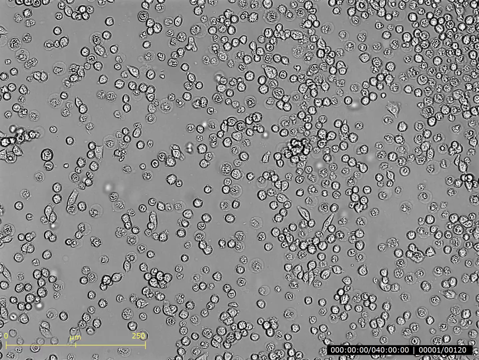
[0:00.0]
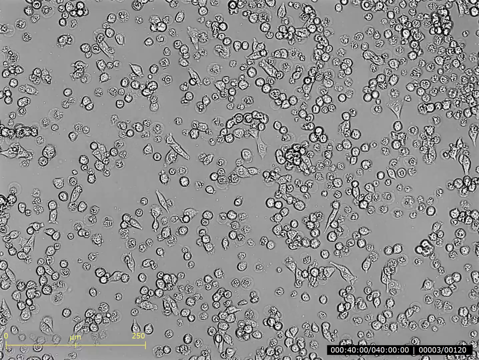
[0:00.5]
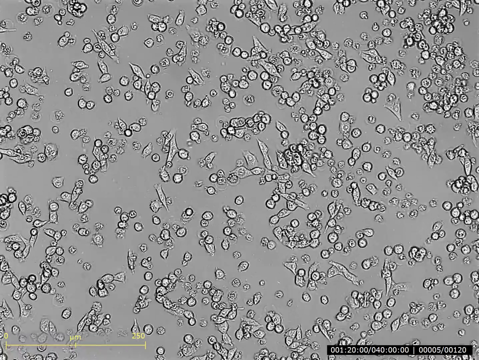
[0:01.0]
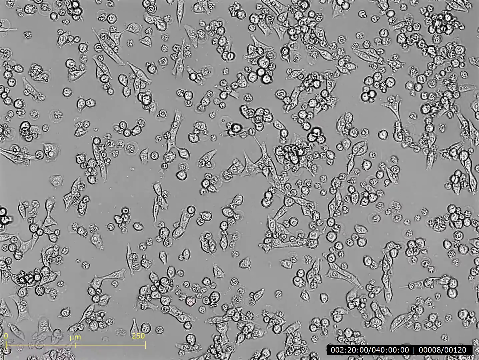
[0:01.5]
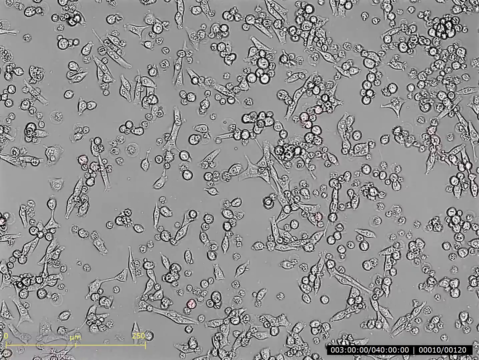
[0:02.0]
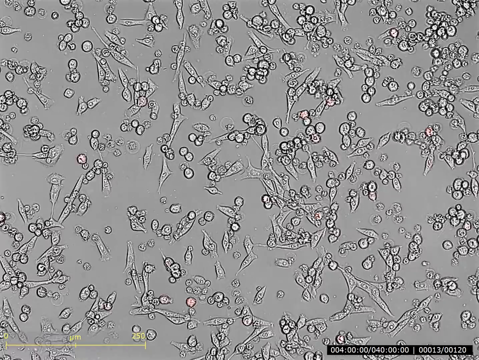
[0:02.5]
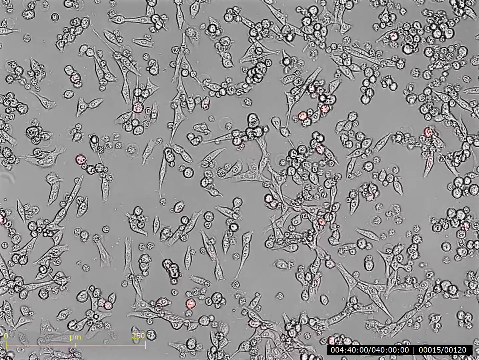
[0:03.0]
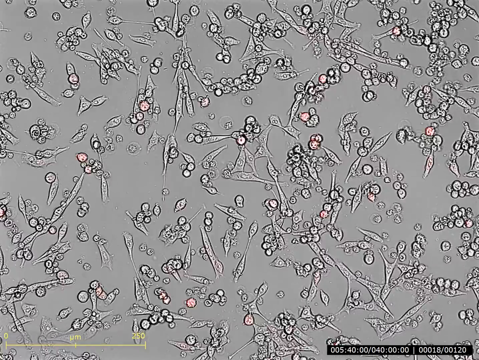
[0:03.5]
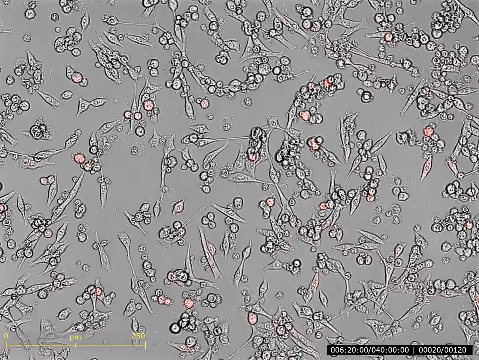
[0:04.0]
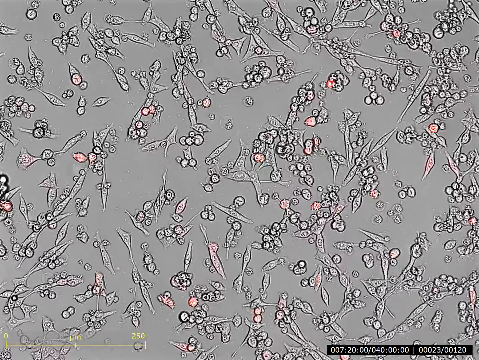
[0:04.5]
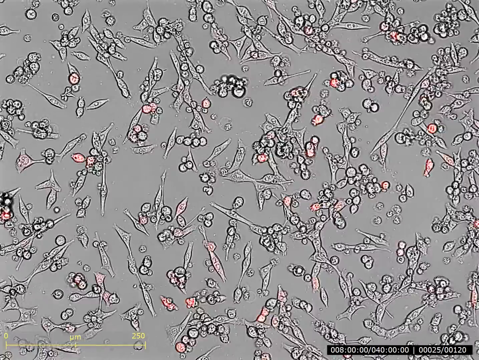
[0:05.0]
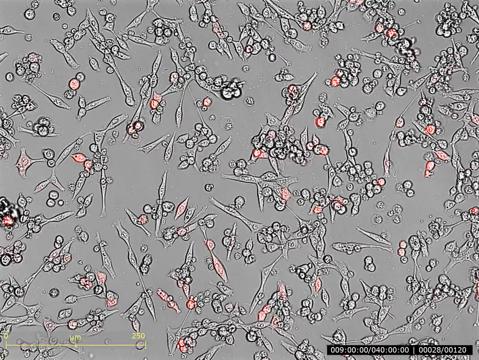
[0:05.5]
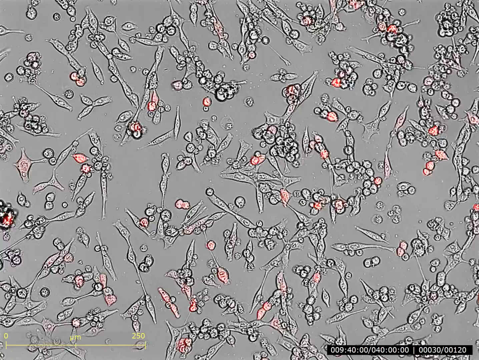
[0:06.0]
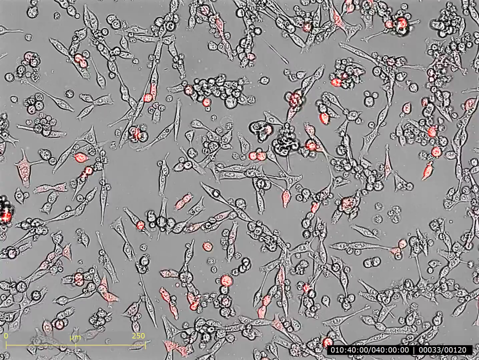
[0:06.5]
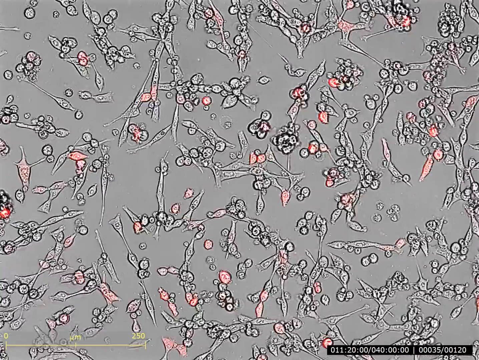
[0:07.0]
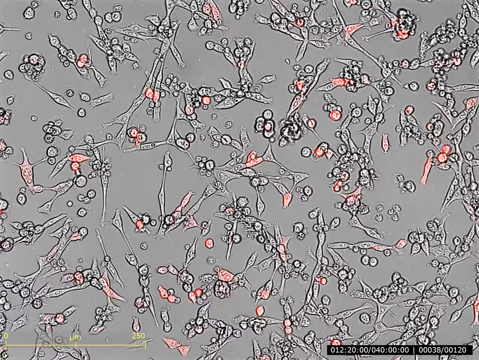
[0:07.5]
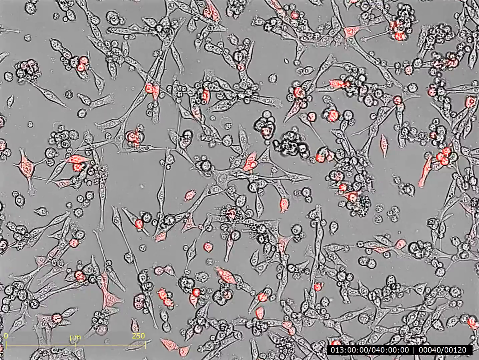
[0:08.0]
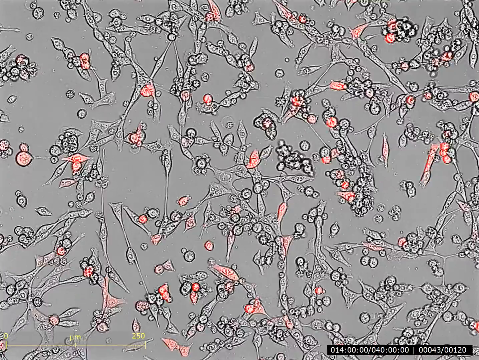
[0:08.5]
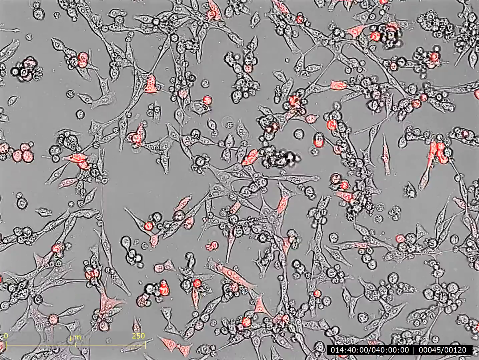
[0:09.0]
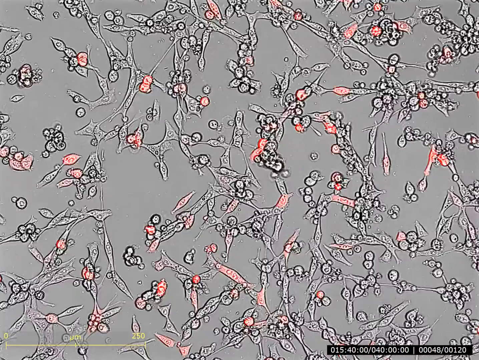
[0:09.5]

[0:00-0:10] The image looks like something seen through a microscope: small, unidentified objects, possibly germs or bacteria, that almost seem to move the way they would under a microscope. The background is a silvery gray, and the objects include some circle shapes and some oblong shapes. At first everything is gray, and as the movement goes on, reddish colors seem to appear. Sometimes the circular shapes hit neighboring circular shapes and form one giant shape, making the whole screen look kind of like it is pulsating as the little things move. In the bottom right there appears to be some type of timer, a black box with white letters, counting down.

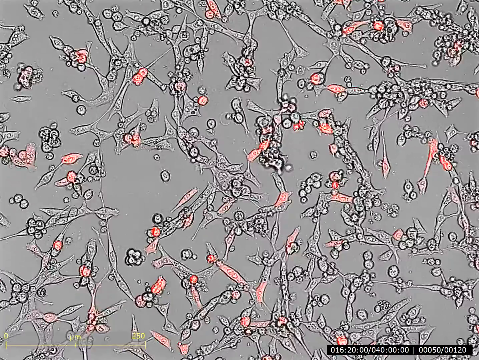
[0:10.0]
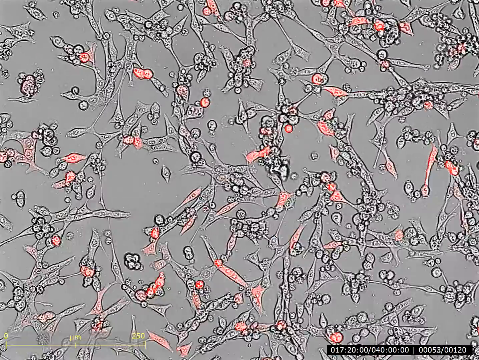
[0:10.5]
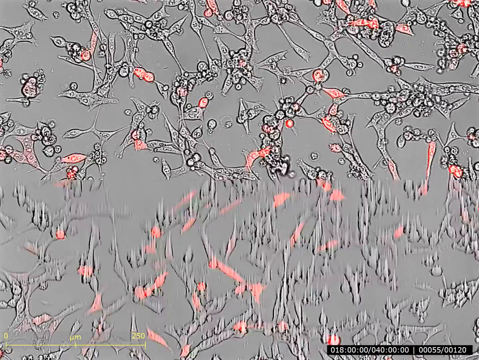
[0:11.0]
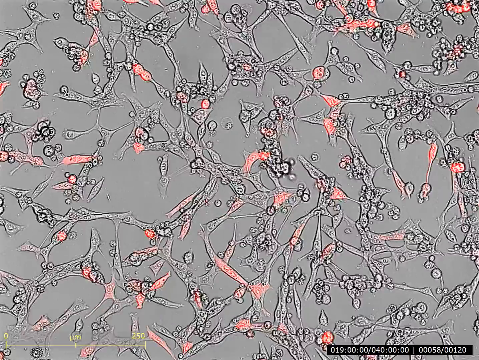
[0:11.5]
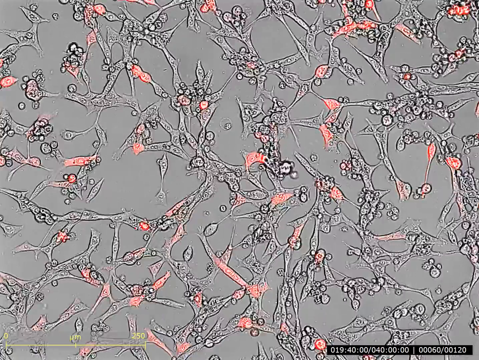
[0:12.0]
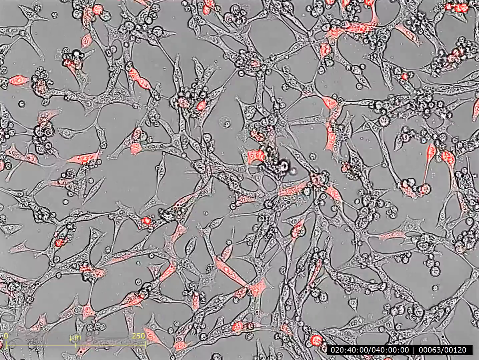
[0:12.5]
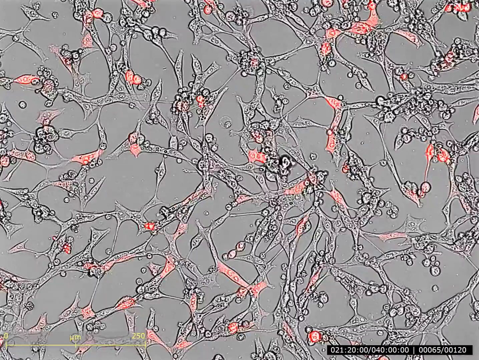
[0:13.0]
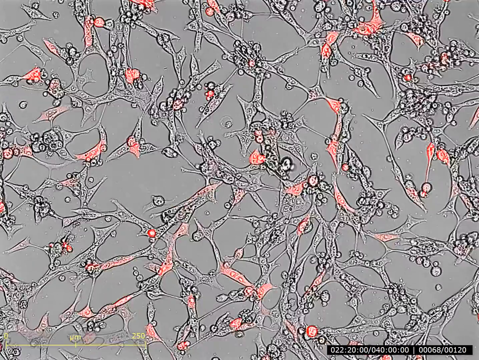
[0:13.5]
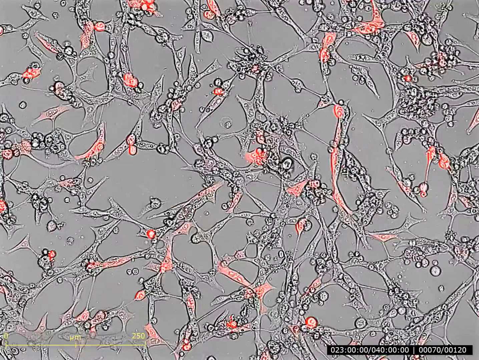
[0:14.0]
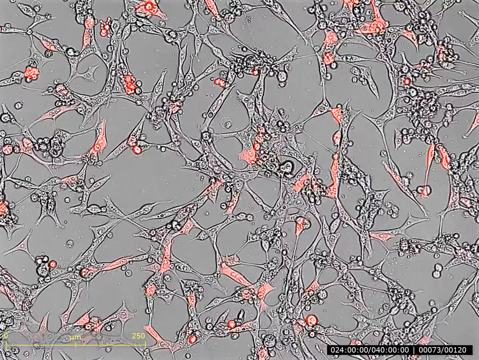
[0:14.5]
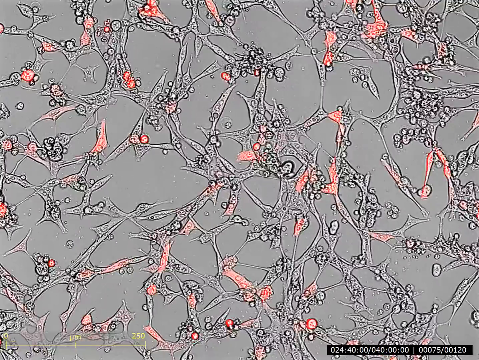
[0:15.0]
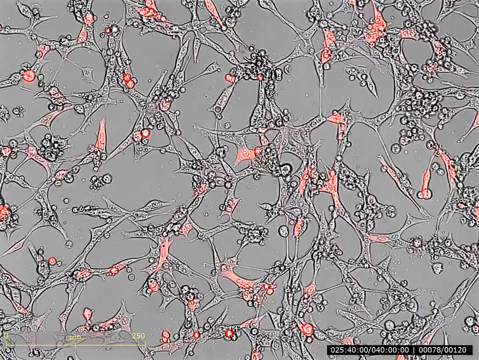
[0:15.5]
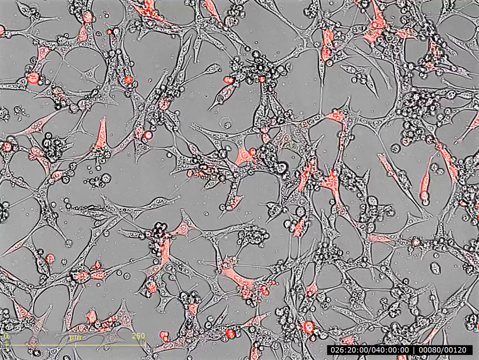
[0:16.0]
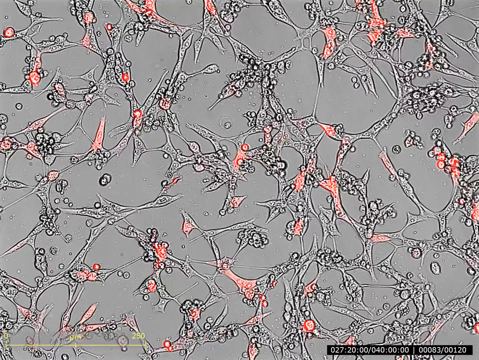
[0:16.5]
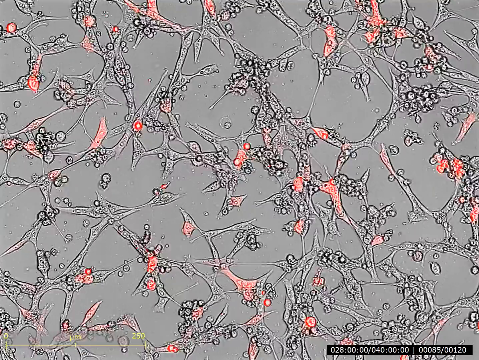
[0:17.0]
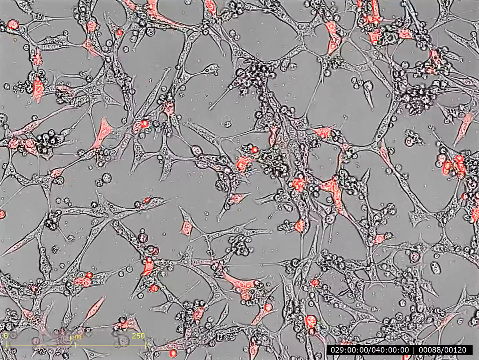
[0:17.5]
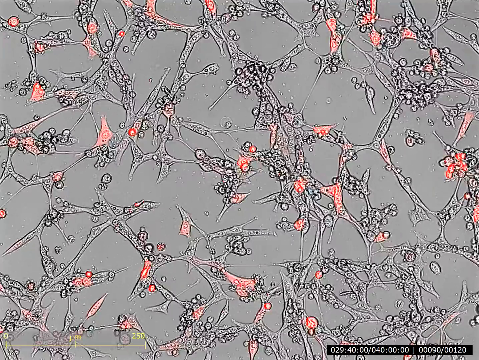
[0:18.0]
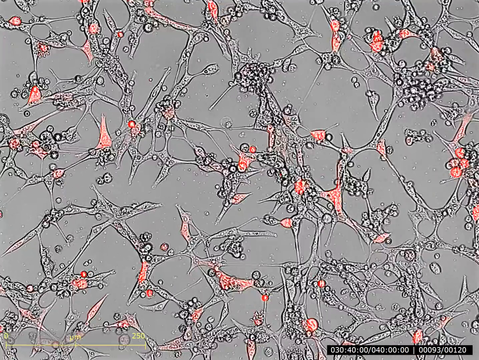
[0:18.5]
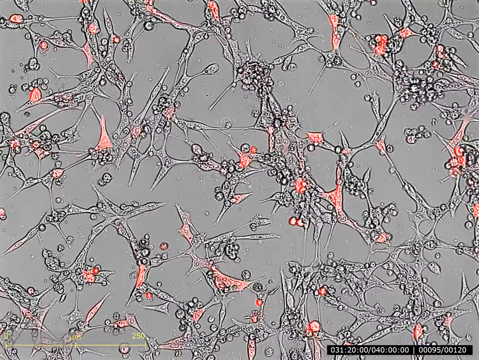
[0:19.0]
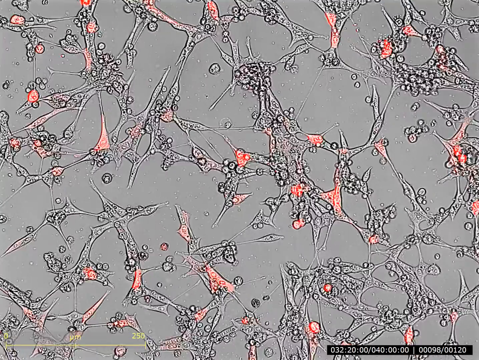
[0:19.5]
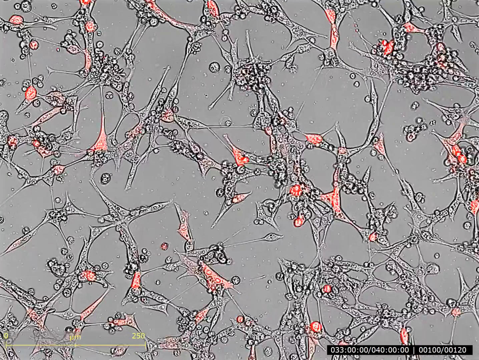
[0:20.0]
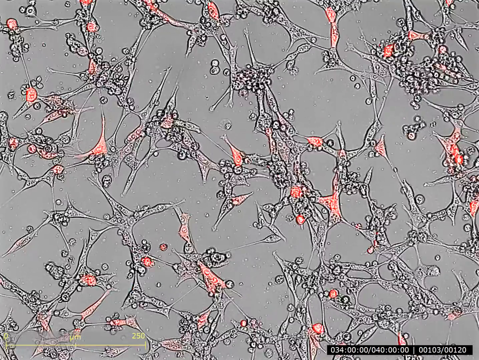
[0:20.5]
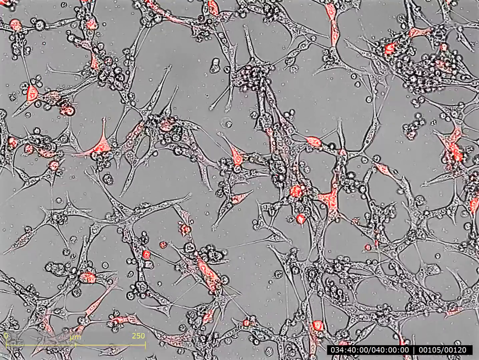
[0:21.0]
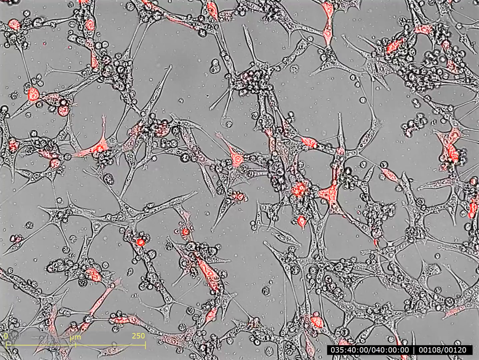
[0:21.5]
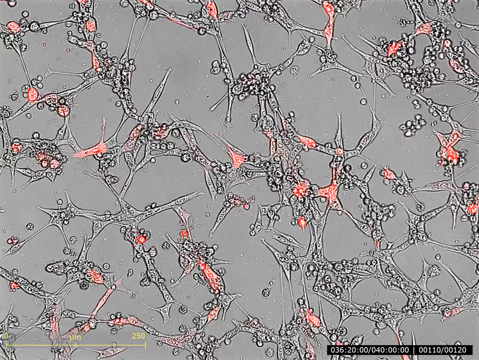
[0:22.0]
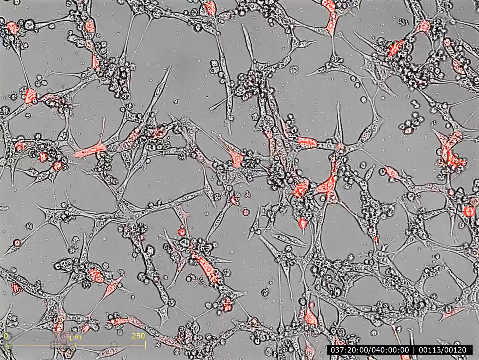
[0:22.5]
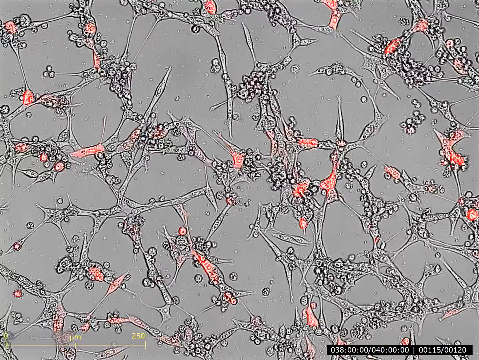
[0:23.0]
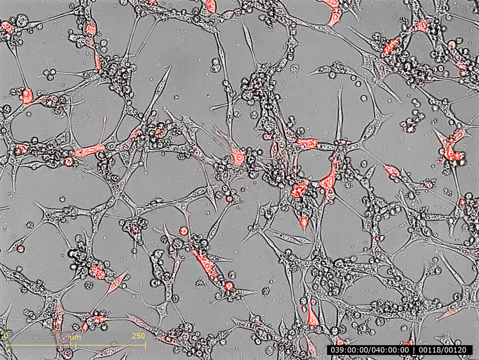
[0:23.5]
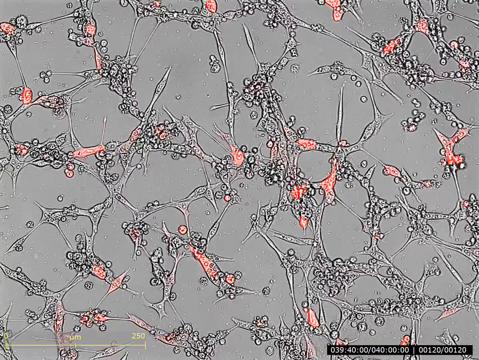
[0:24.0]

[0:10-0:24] Some of the objects are still gray while others have a pinkish-red color. At one point there almost seems to be a flash of light, and many of the objects appear to have kind of joined together, almost looking partly connected. They keep a kind of pulsating motion, making disjointed movements back and forth, and almost look like connective tissue. The circles are still there along with the connective parts around them, and much of it seems to have a darker black outline with color inside. The black bar at the bottom is still doing some type of countdown.